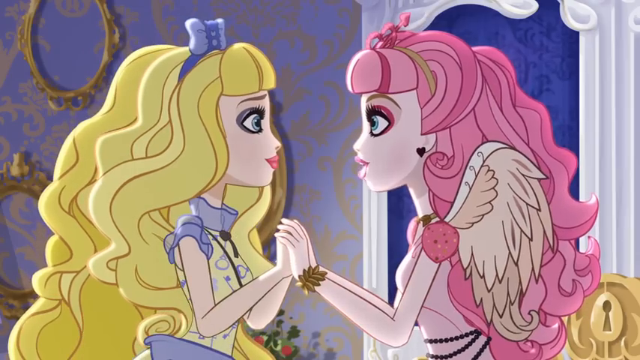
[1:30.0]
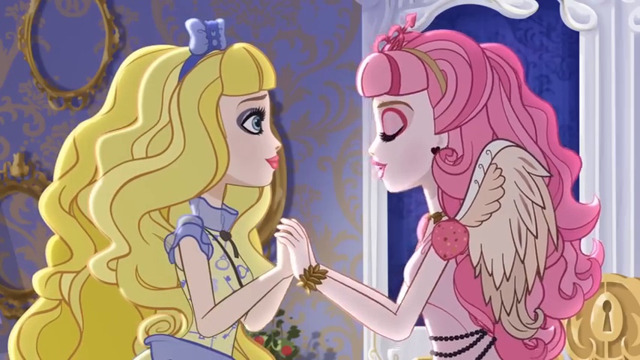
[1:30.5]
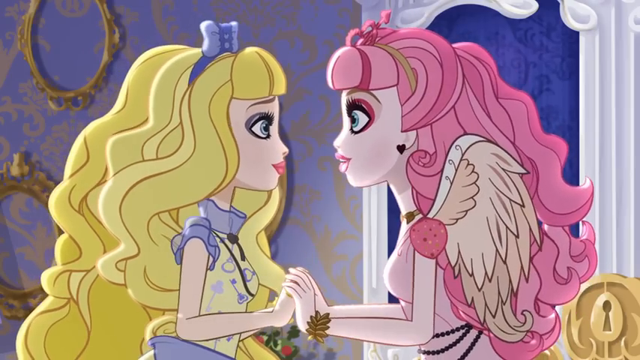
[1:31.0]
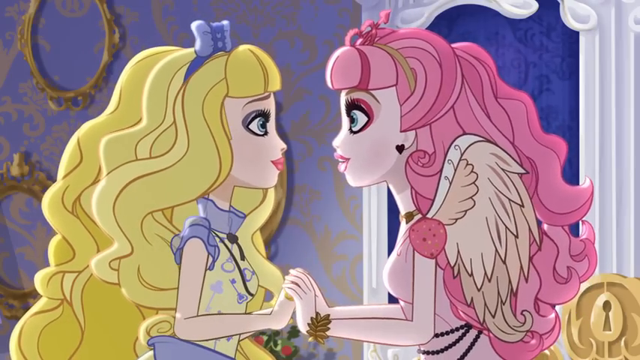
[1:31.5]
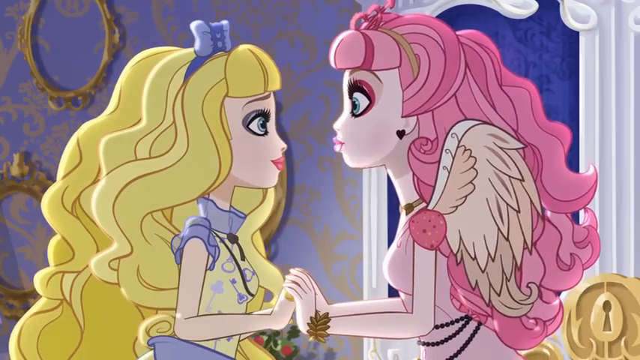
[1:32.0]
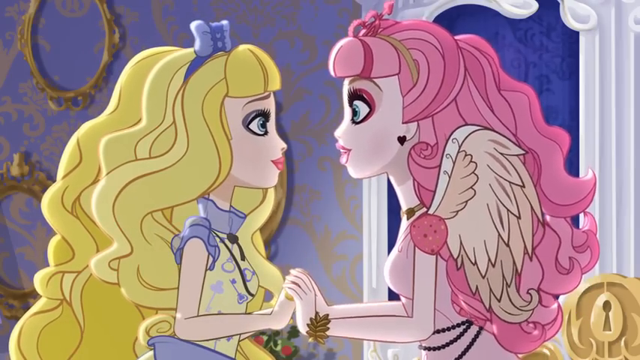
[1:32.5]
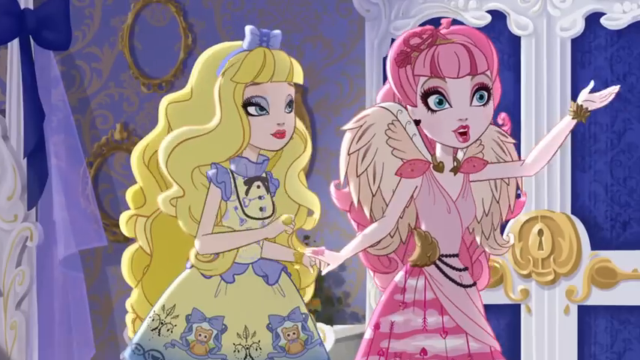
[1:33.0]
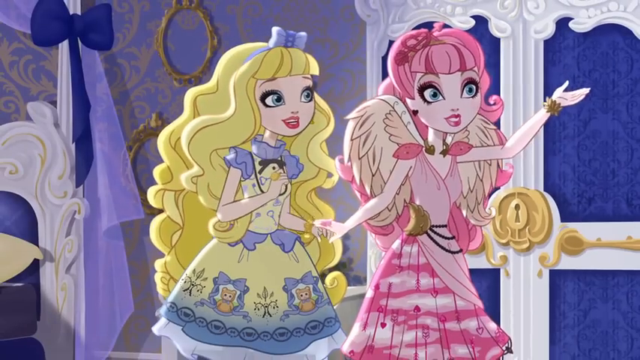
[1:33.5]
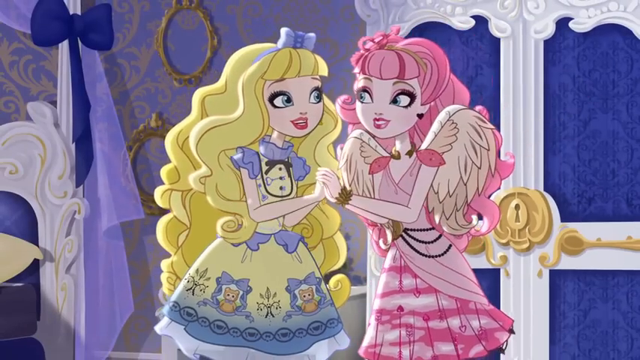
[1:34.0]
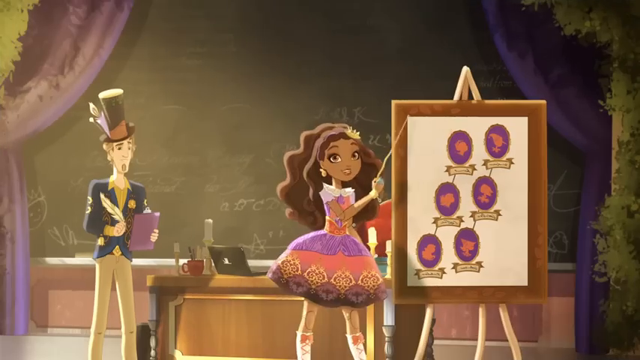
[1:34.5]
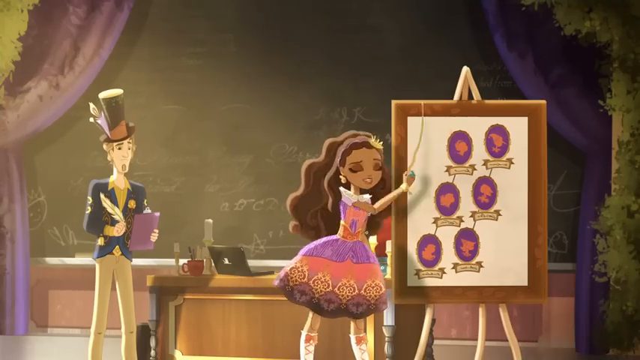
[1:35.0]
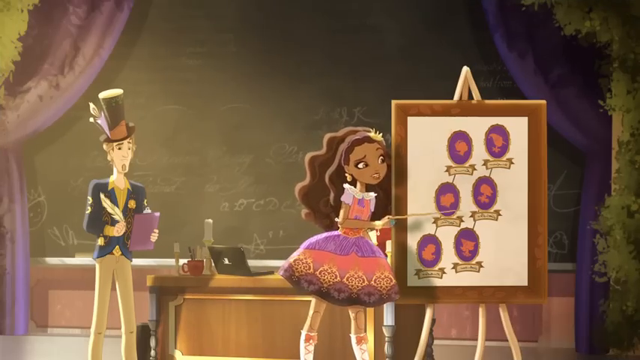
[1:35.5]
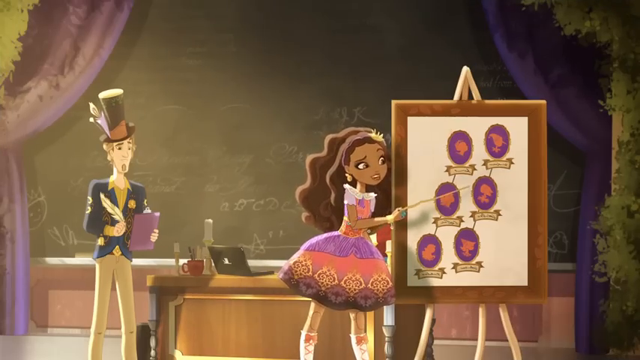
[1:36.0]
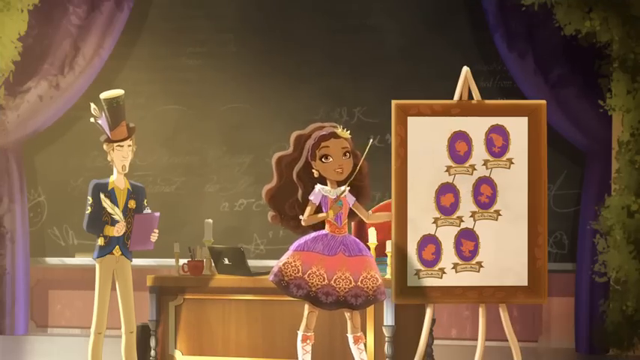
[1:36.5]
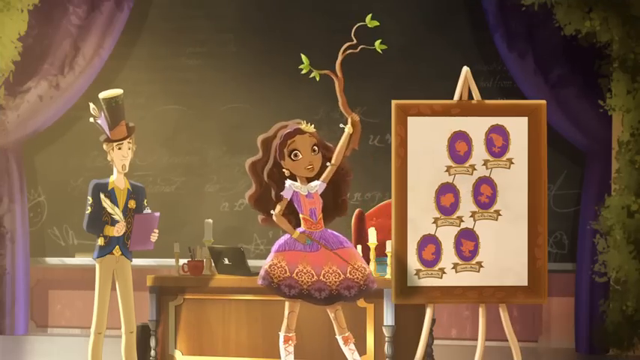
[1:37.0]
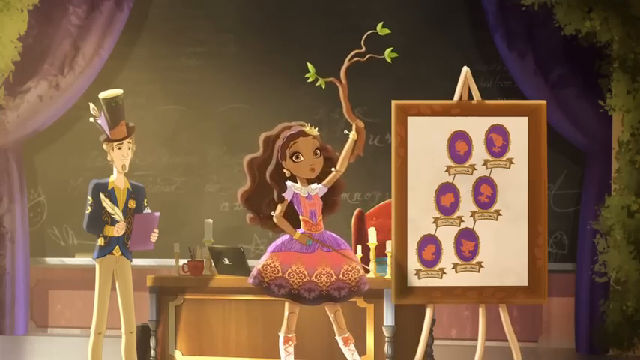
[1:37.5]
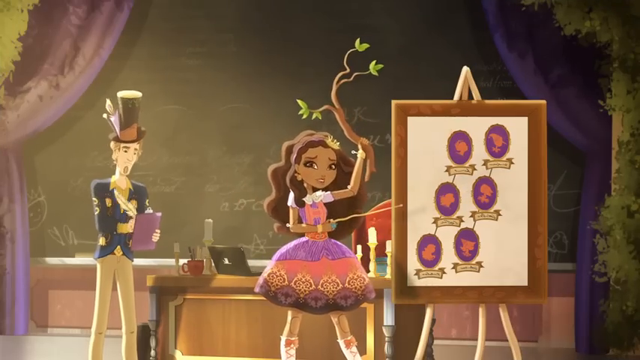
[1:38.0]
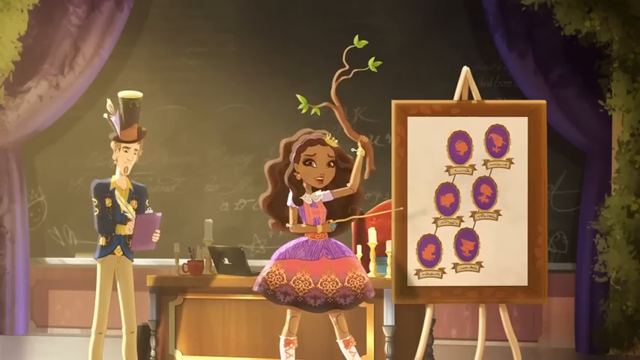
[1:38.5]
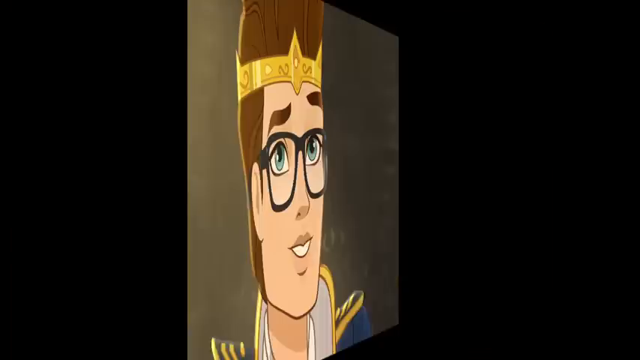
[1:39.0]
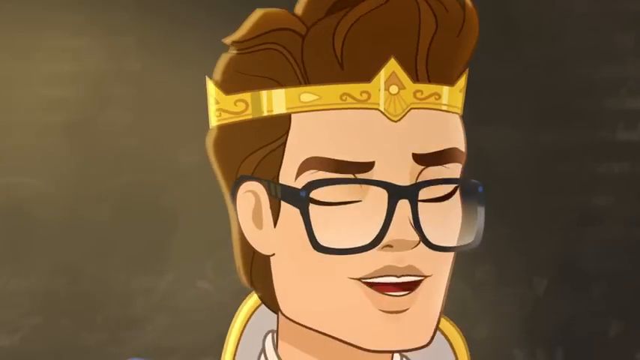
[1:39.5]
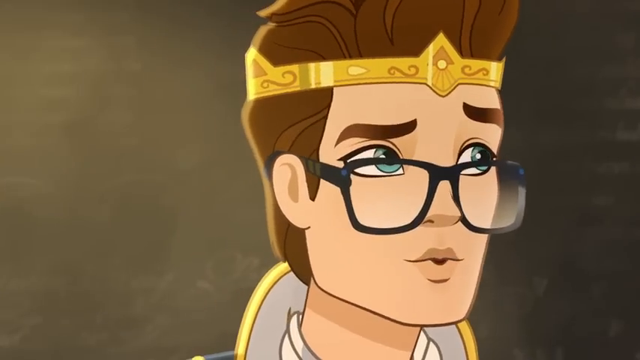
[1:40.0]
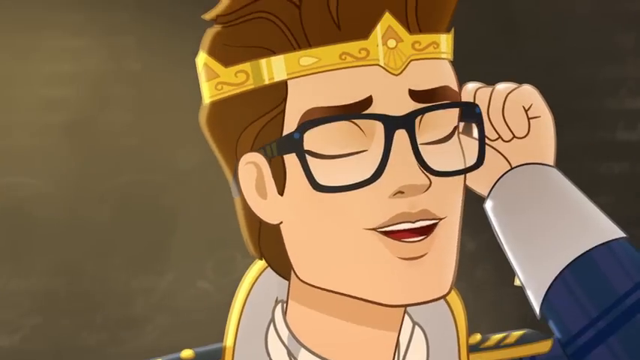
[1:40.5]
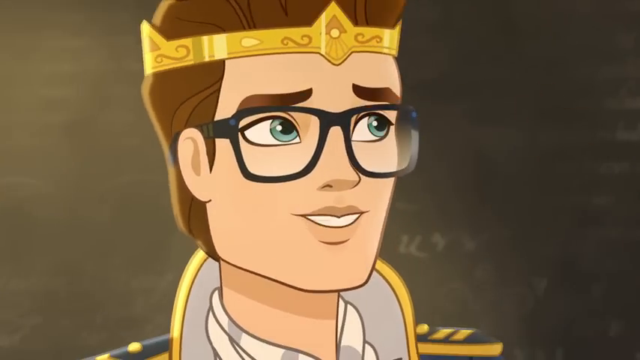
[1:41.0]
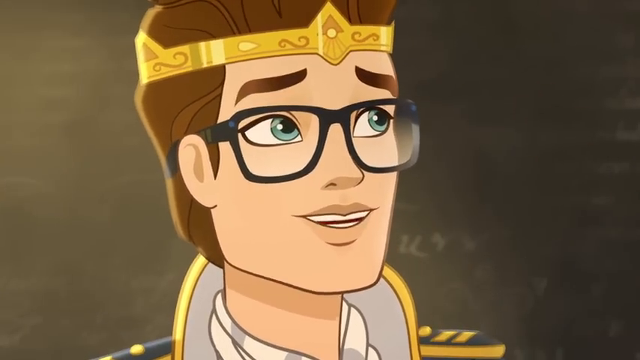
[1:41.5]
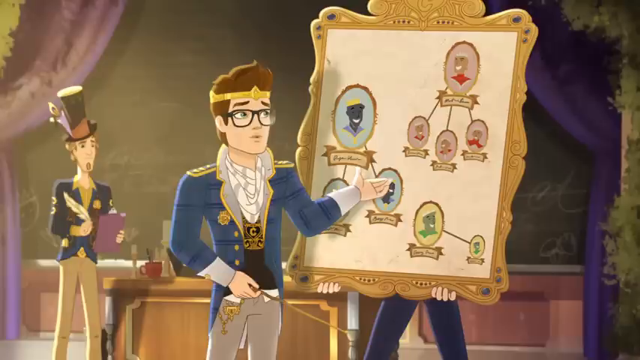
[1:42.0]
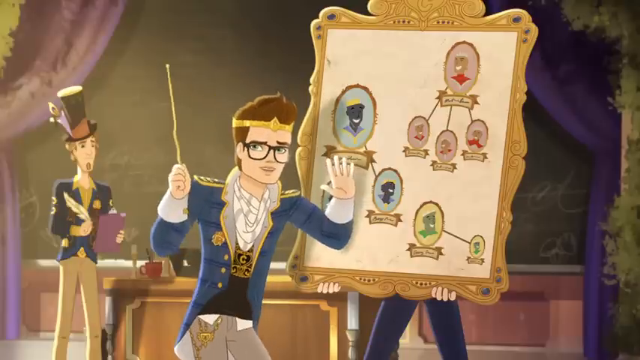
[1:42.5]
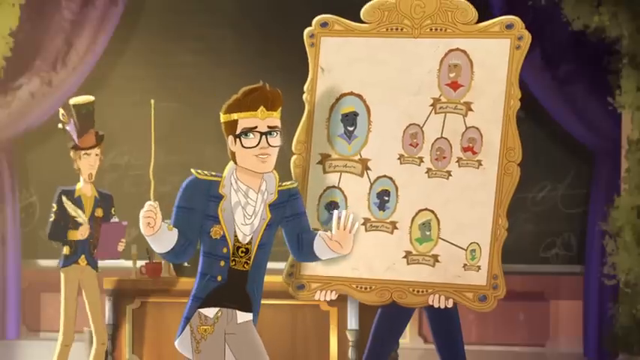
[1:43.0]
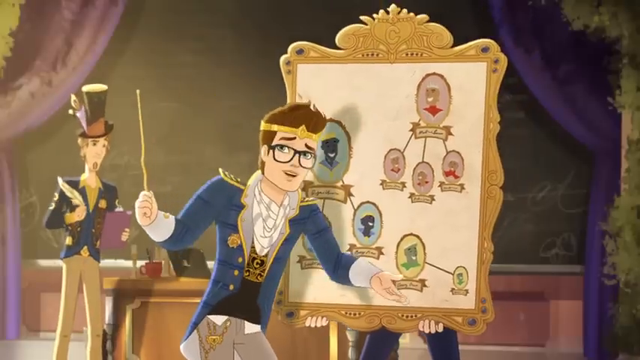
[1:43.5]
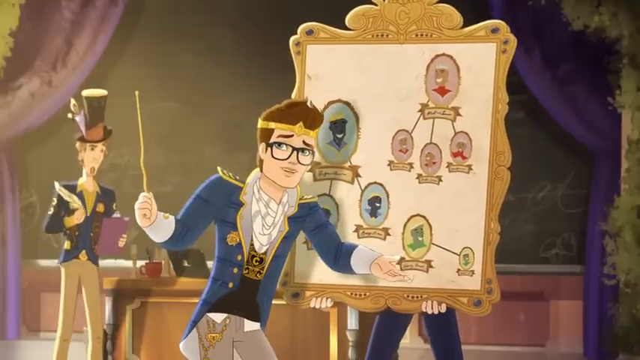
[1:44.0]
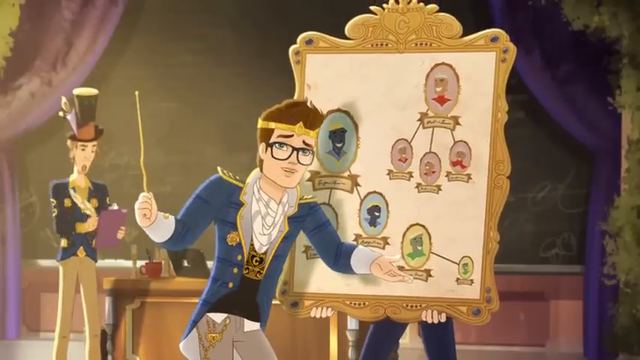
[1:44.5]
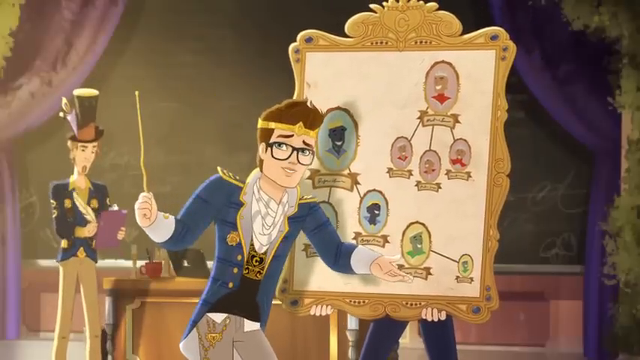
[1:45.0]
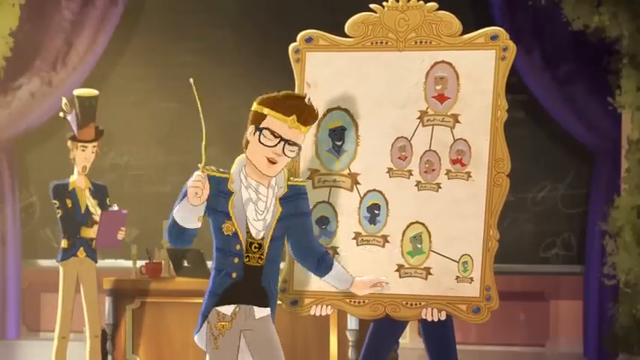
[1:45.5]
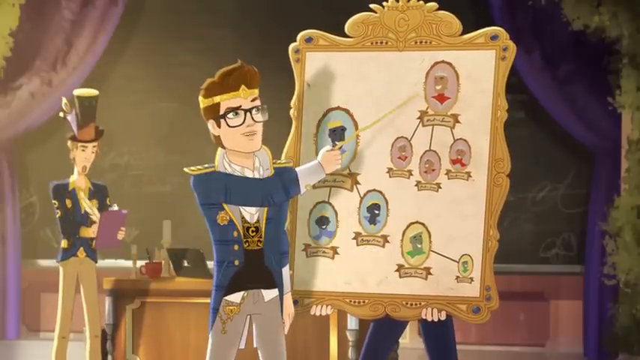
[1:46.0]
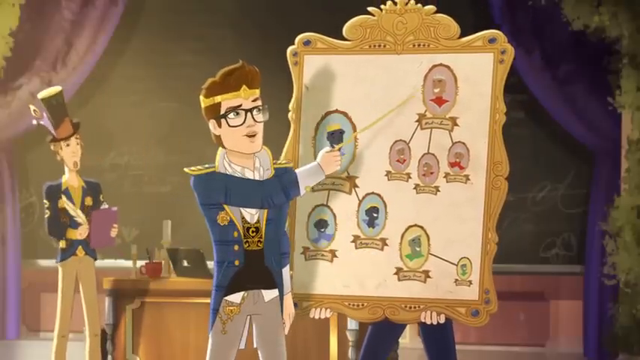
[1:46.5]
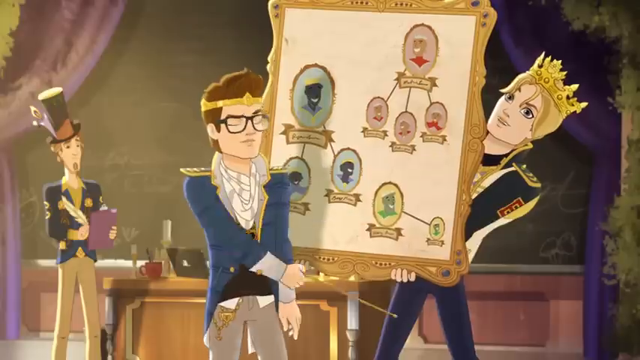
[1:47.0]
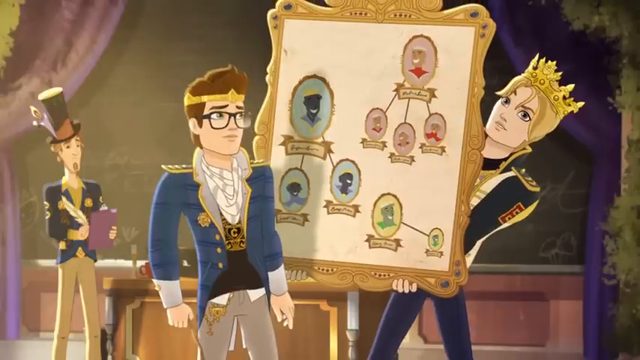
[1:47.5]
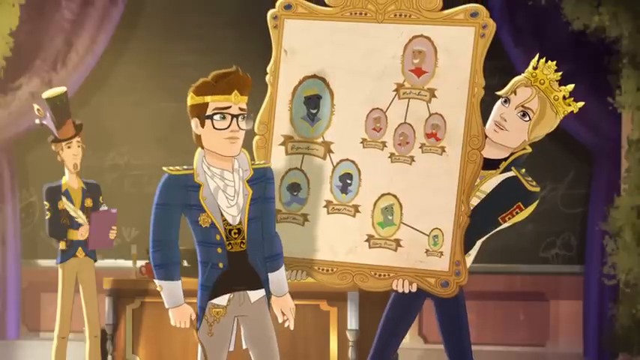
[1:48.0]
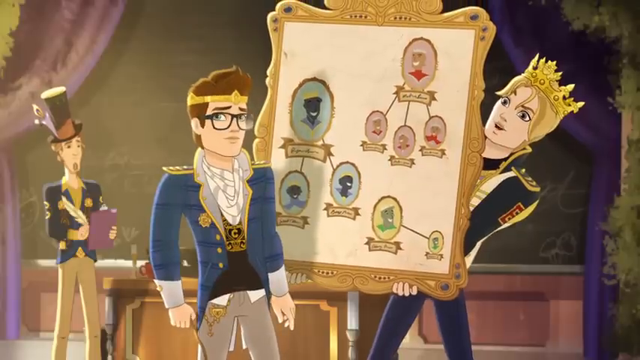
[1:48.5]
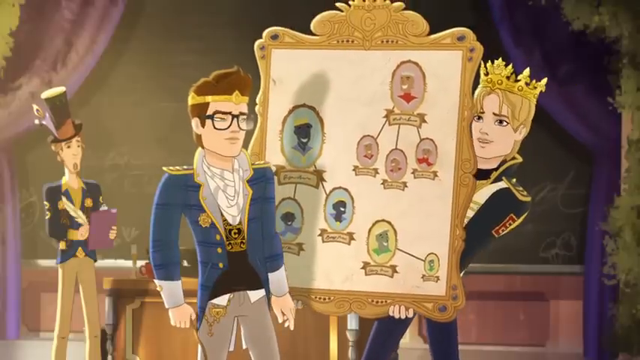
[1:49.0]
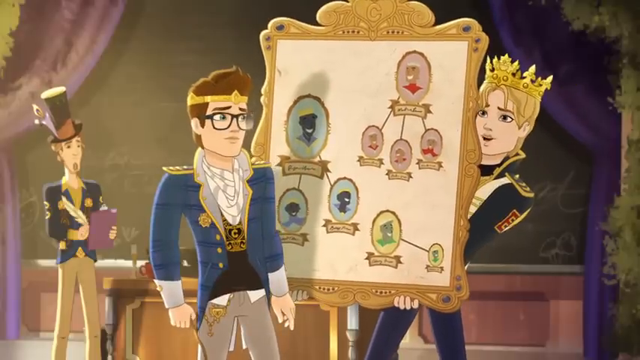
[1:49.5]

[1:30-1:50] The blonde fairy-tale princess, with a blue bowtie in her hair, makeup, and a blue ribbony dress, holds hands with the girl in pink with wings and a kind of Cupid-related dress. Both are happier than before, and the one in pink is extremely excited to describe something. The scene then switches to another girl holding a branch, maybe describing her family tree in an awkward fashion. Next, a gentleman with glasses describes his family tree, which he holds up with someone behind it.